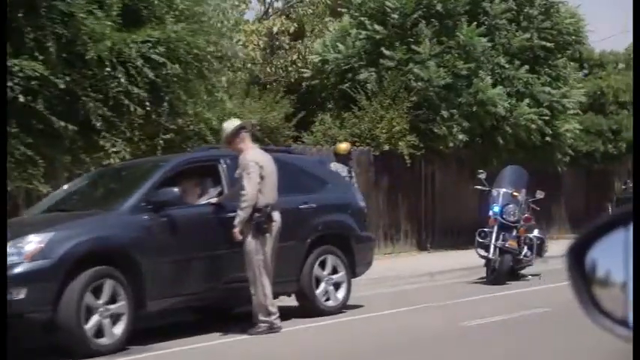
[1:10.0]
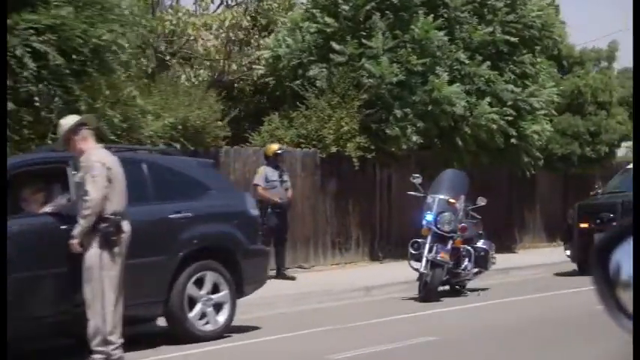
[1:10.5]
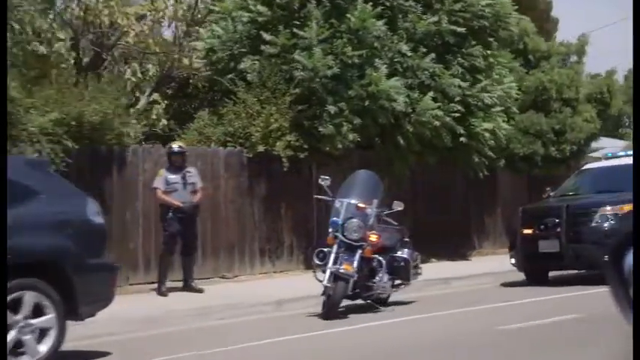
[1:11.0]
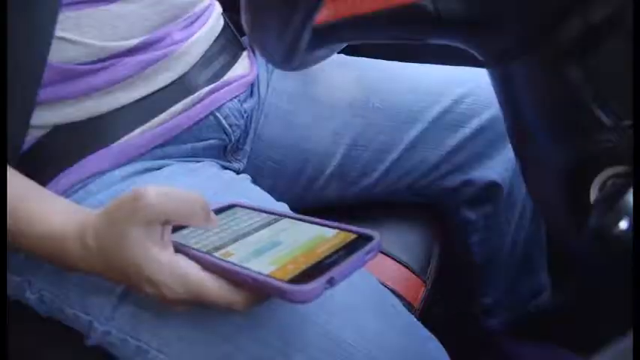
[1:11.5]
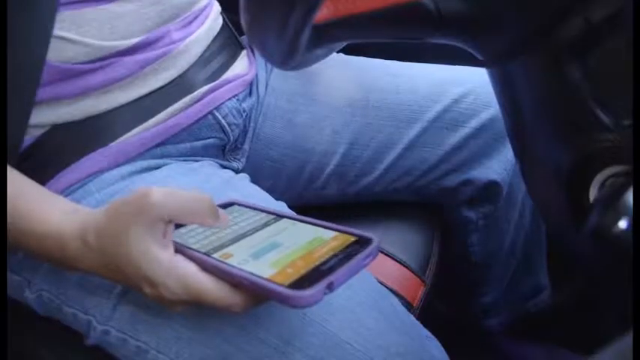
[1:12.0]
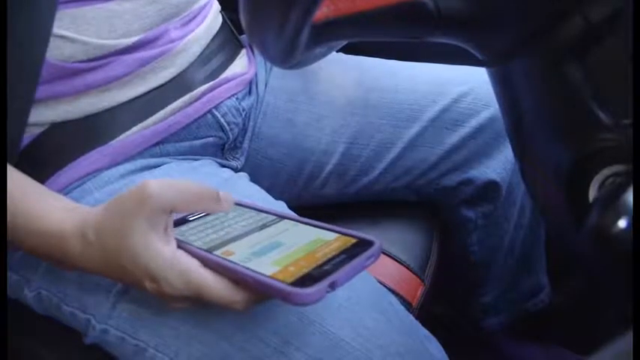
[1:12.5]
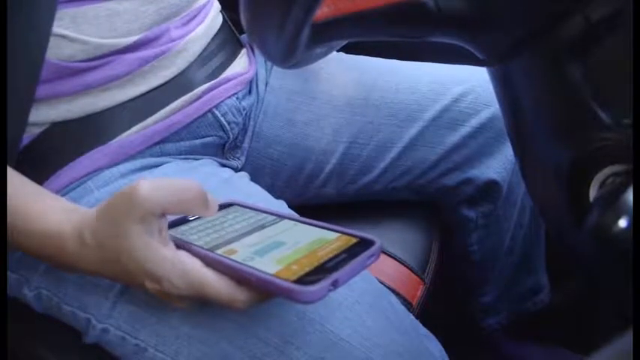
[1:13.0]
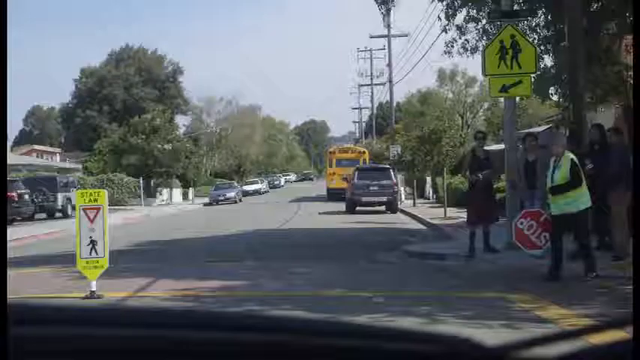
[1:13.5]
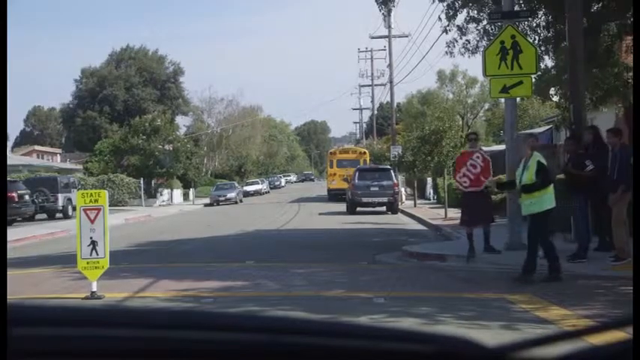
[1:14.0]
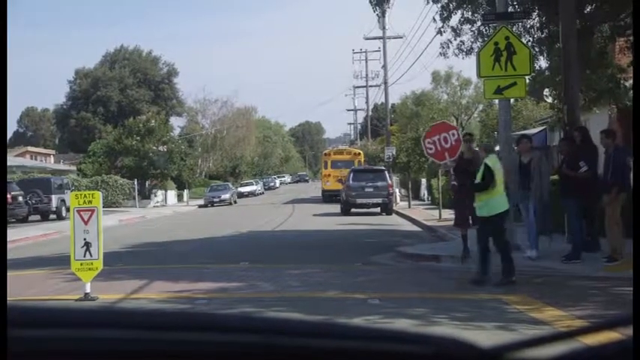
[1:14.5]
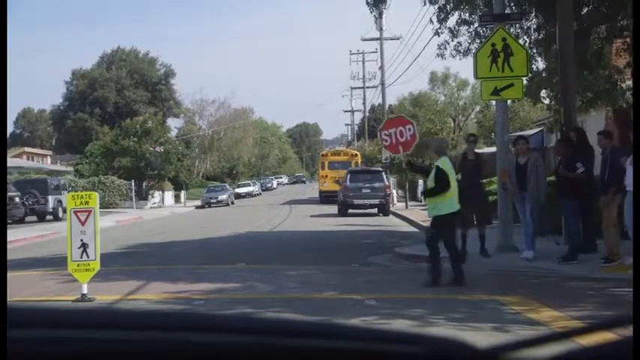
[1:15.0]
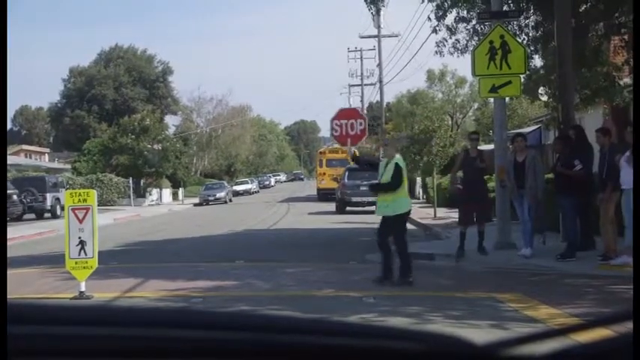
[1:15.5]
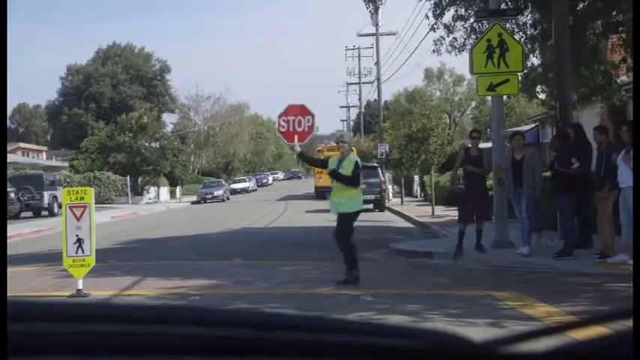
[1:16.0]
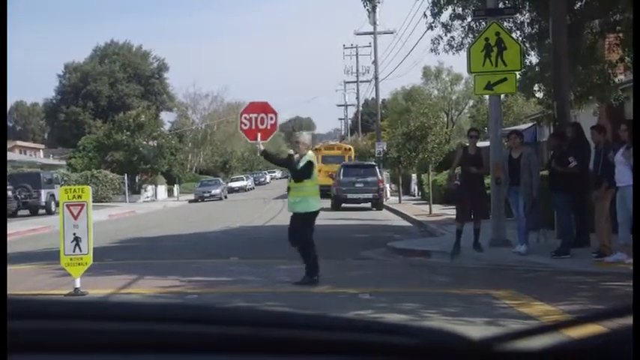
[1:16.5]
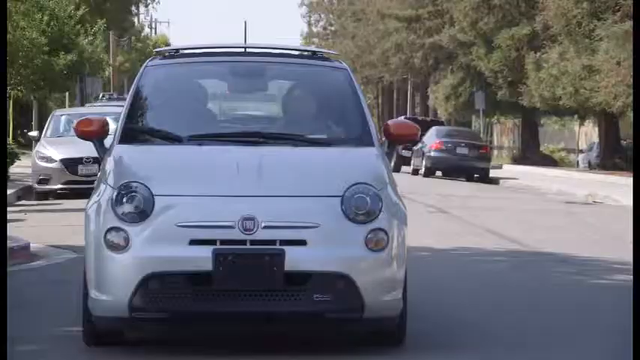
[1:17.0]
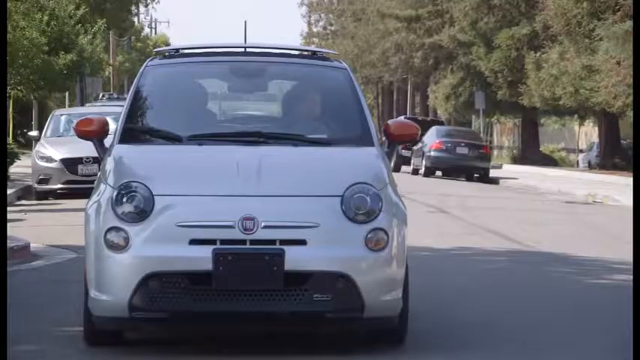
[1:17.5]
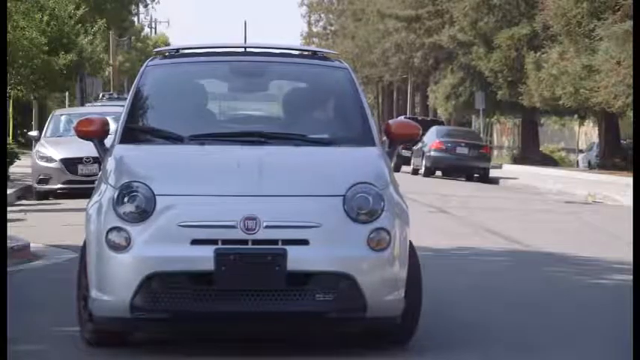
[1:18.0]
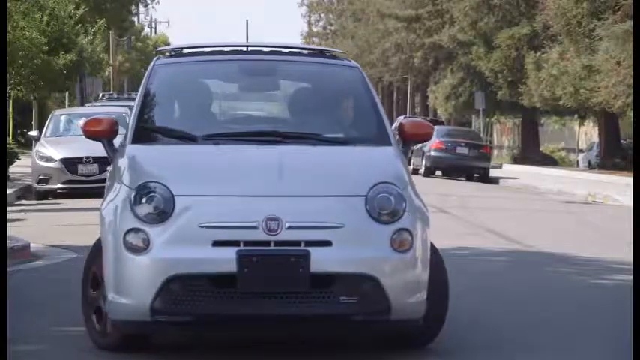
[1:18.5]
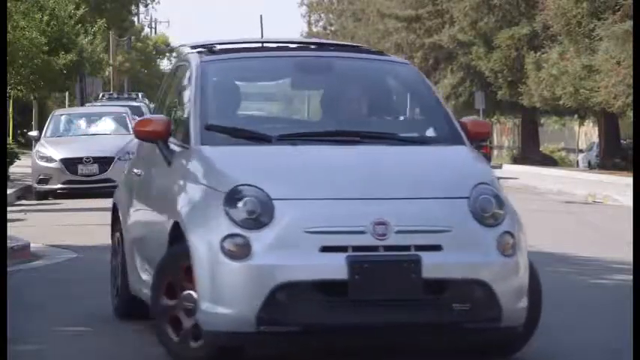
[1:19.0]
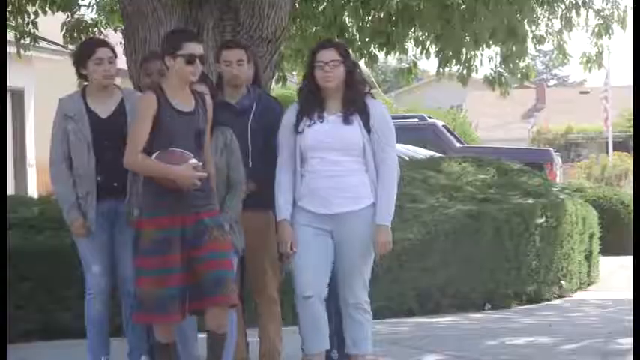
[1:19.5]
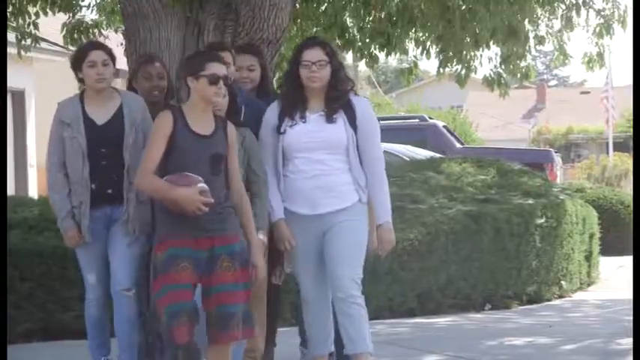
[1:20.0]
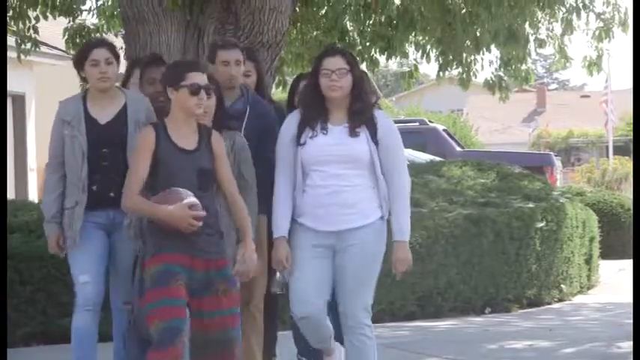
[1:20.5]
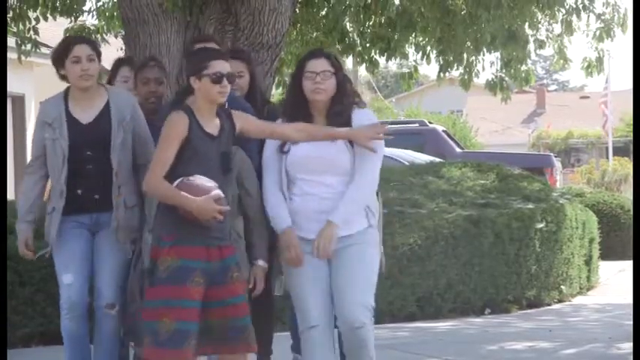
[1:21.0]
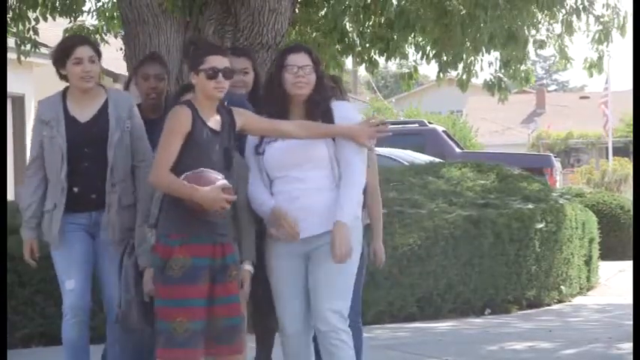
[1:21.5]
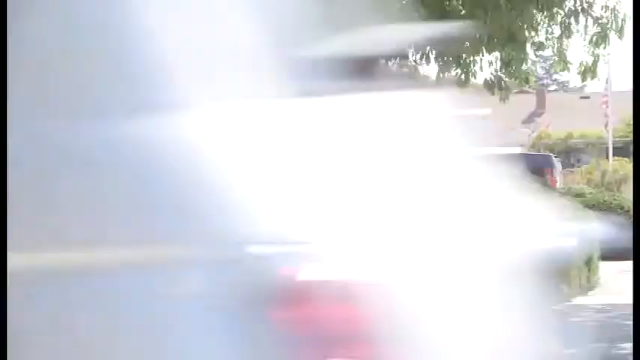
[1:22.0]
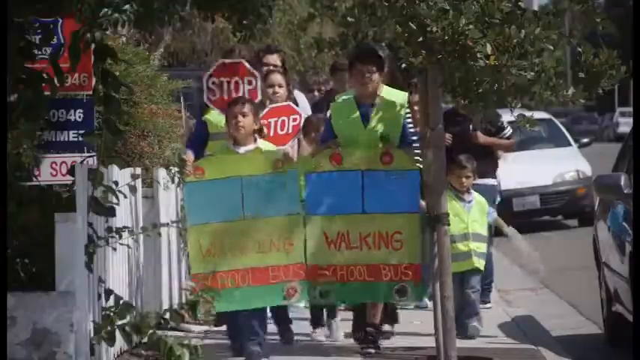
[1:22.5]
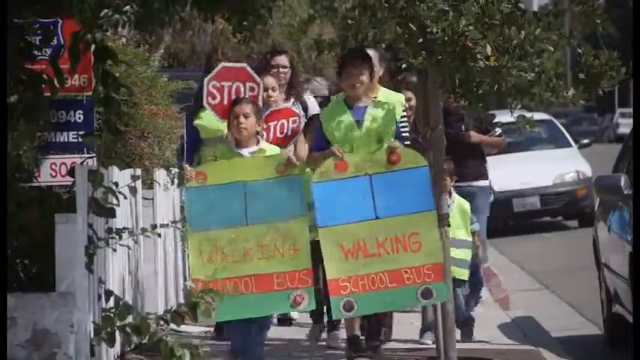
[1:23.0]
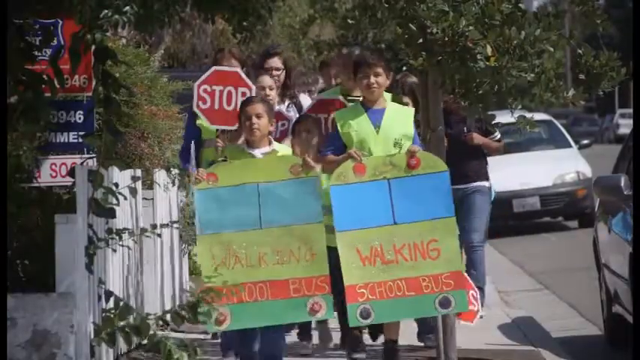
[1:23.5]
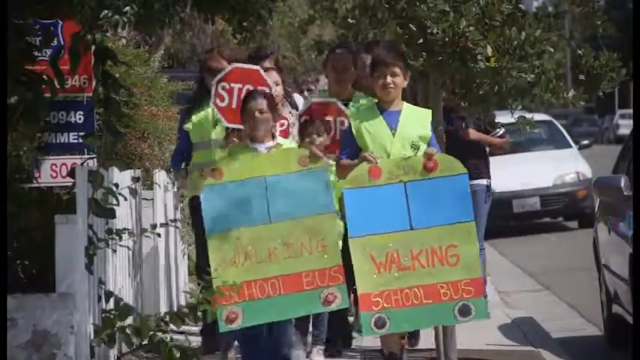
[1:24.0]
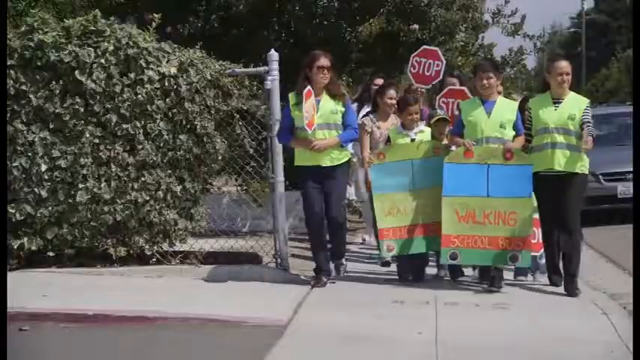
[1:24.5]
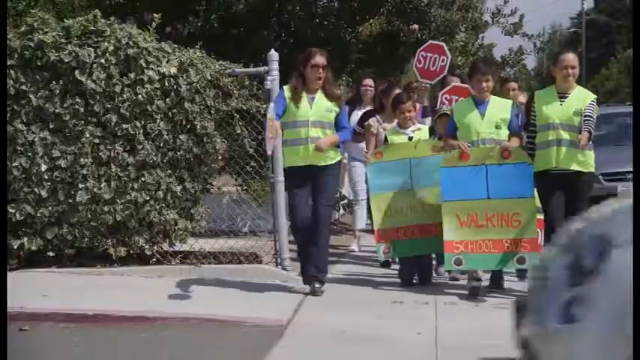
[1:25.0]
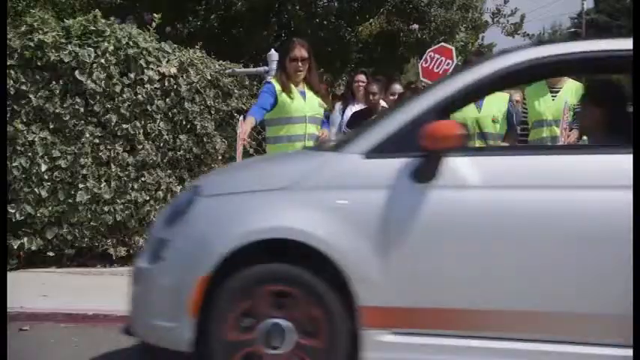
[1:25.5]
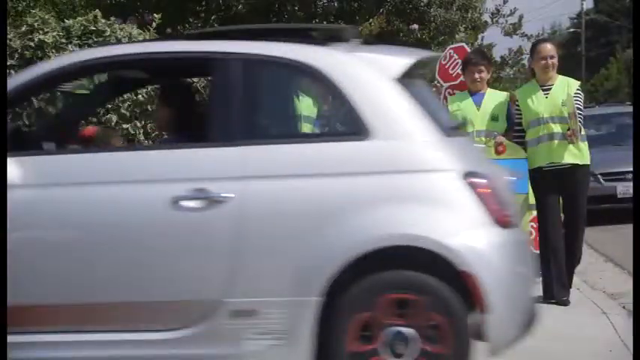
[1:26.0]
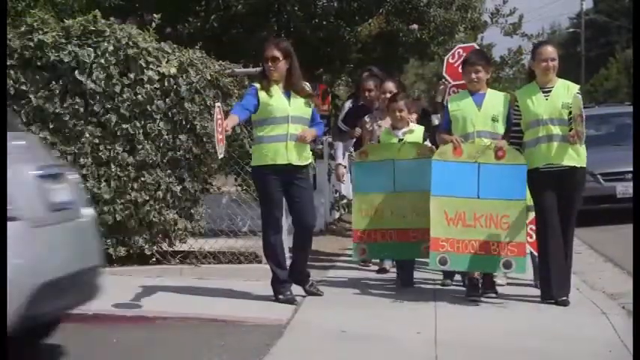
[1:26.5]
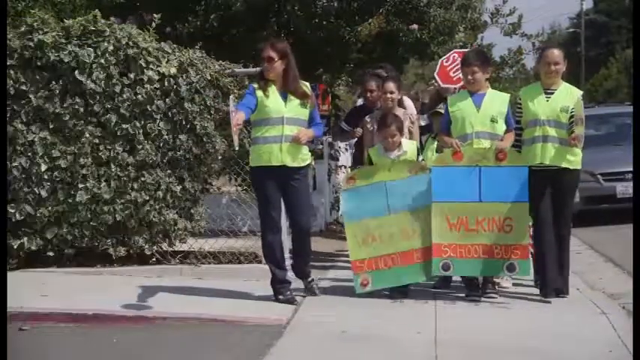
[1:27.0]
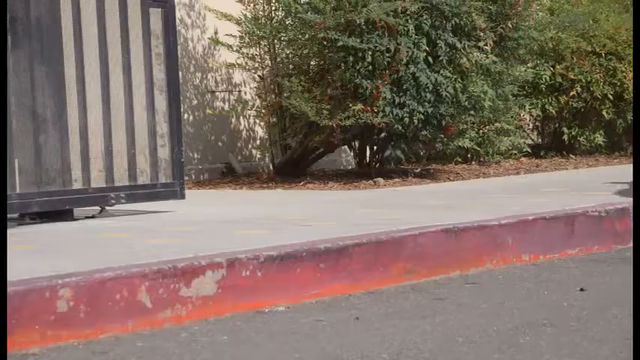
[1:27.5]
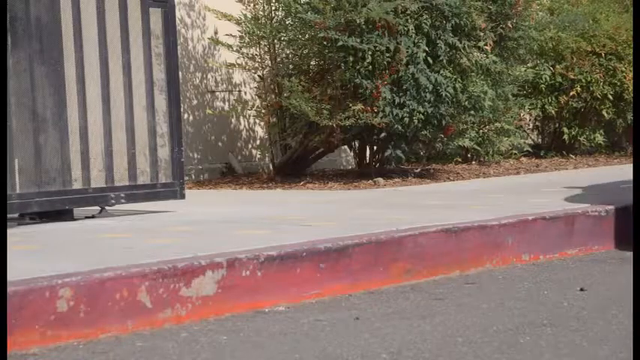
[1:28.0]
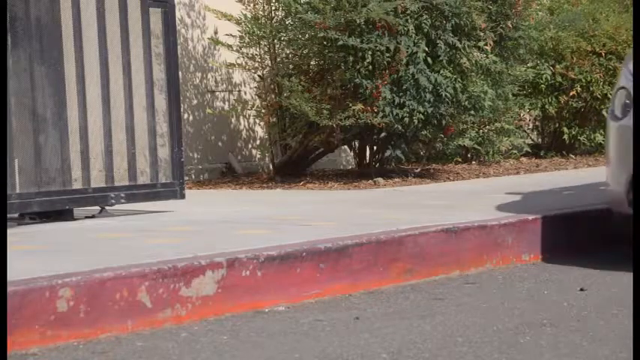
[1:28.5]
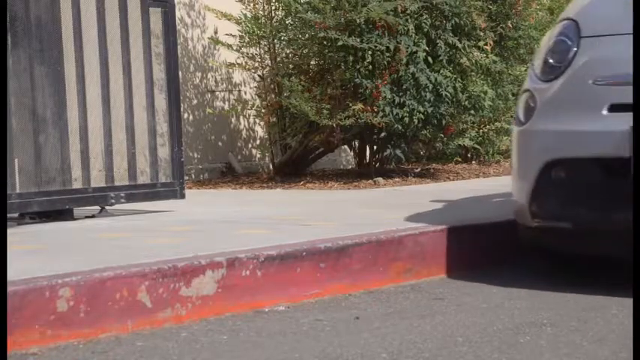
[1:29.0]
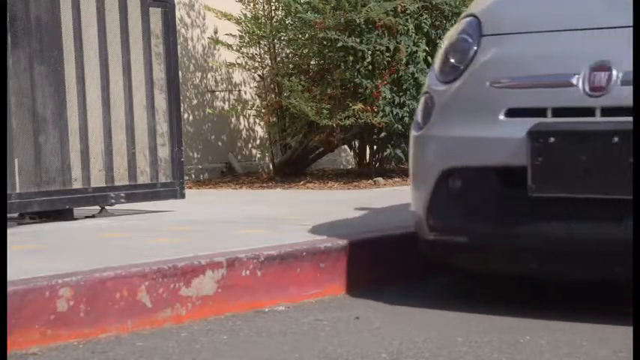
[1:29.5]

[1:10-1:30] The lady manages to drive past the police officers at the roadblock. She uses her cell phone in the car again as she continues to chat, and the camera focuses on the phone on her lap. A lady holding a stop sign indicates that any incoming cars need to stop for pedestrians. The camera focuses on the lady's car again as it takes a turn, refusing to stop for the stop sign held by the lady in a vest, and the small car speeds off just as the pedestrians are about to cross. In the next scene the small car speeds along the road again, this time past a group of children and their teachers who are holding stop signs. The video then transitions to the small car slowing down on the side of the road.